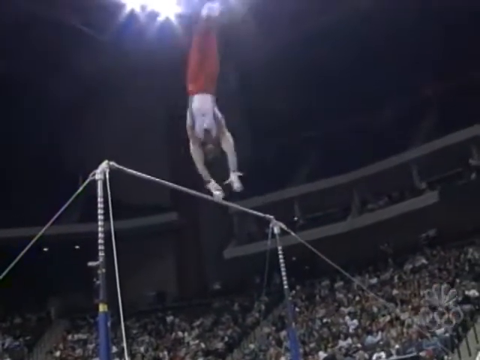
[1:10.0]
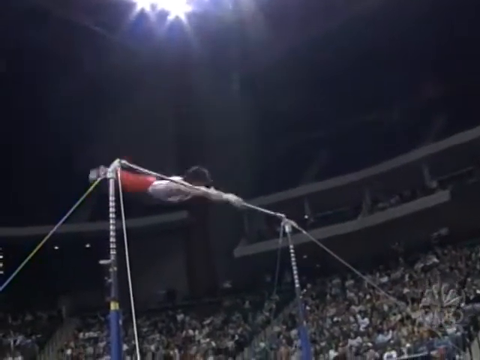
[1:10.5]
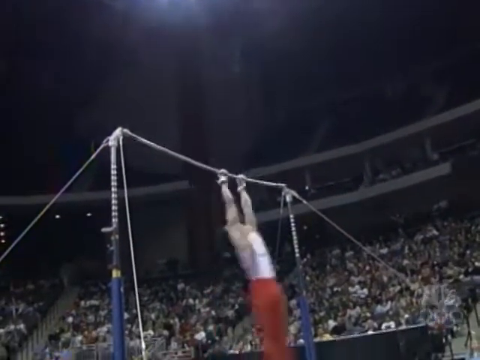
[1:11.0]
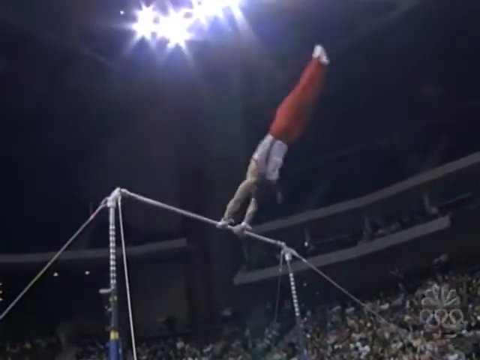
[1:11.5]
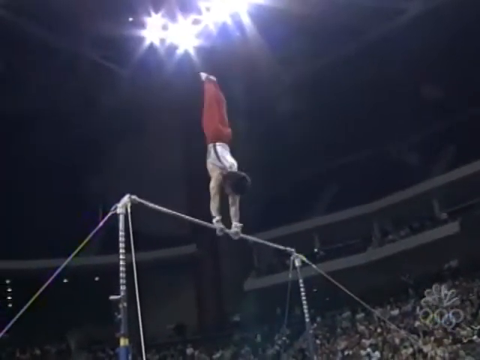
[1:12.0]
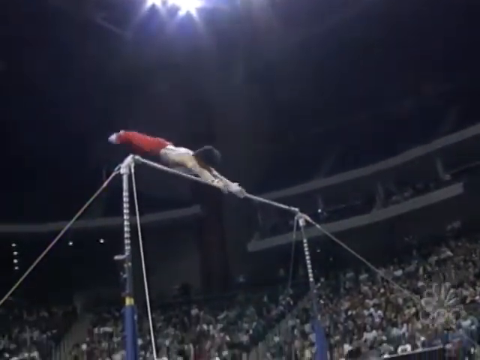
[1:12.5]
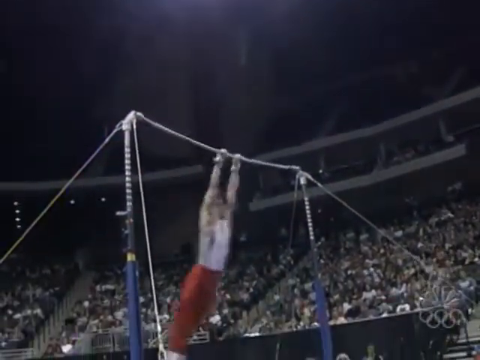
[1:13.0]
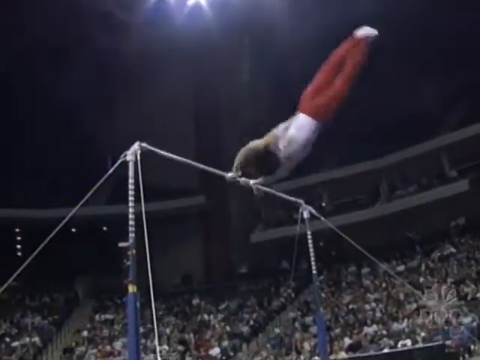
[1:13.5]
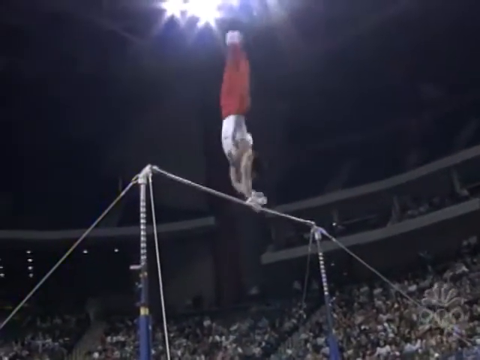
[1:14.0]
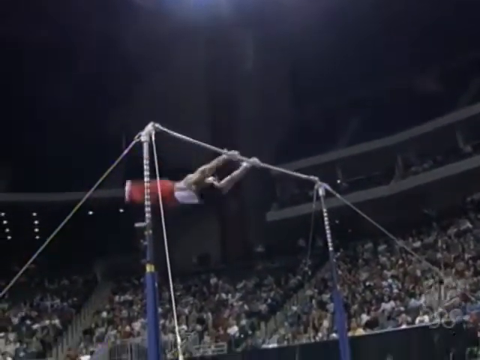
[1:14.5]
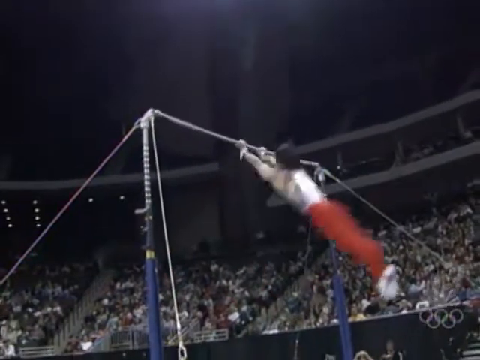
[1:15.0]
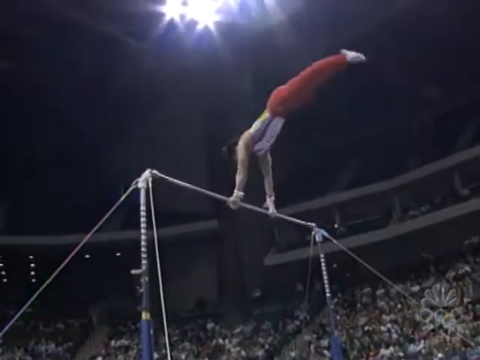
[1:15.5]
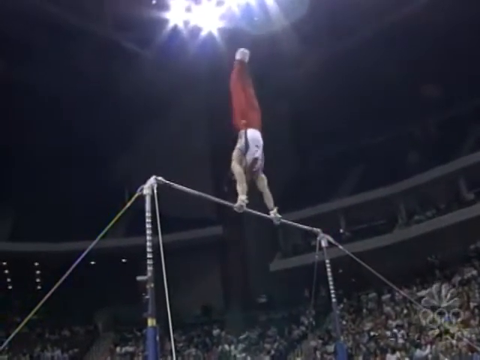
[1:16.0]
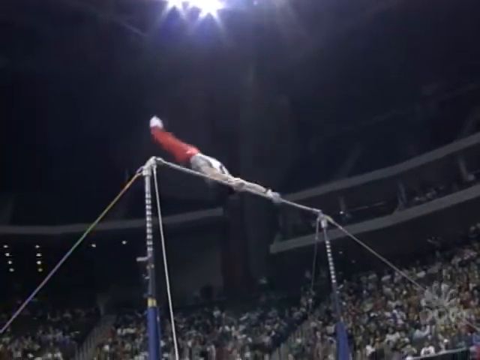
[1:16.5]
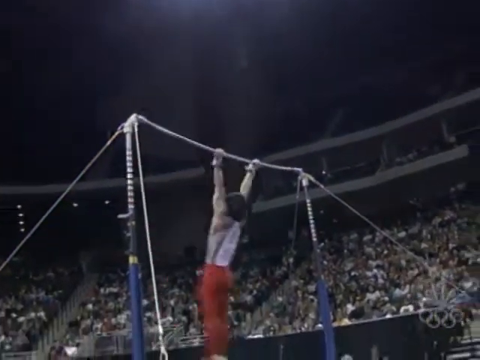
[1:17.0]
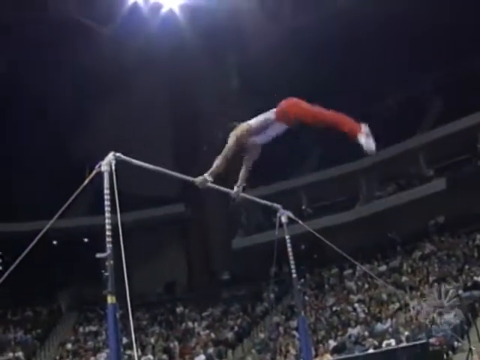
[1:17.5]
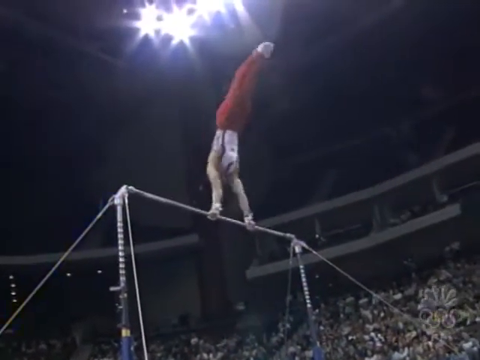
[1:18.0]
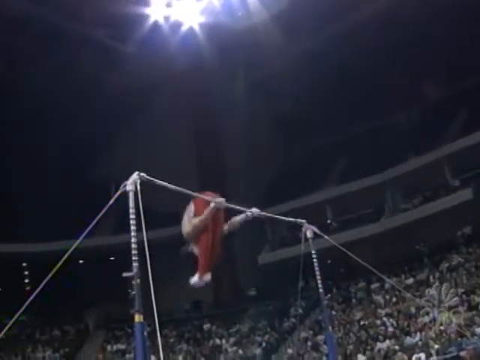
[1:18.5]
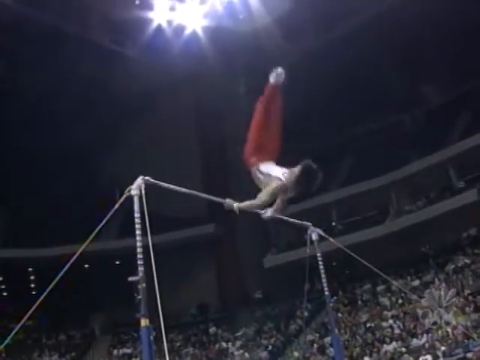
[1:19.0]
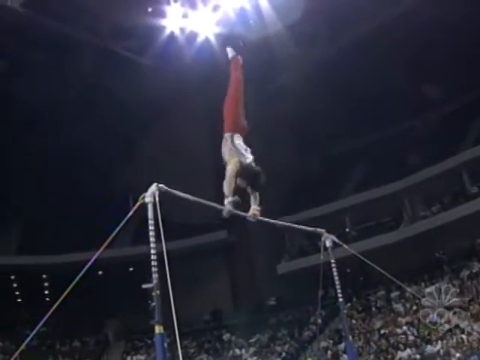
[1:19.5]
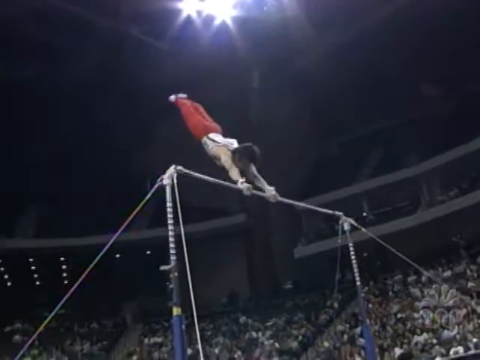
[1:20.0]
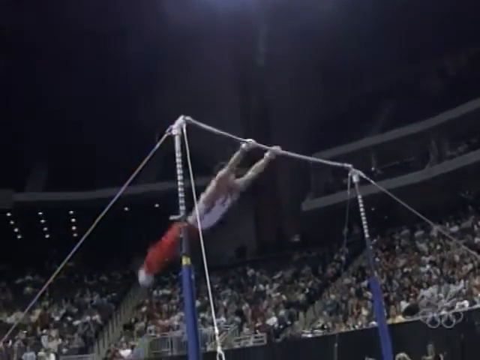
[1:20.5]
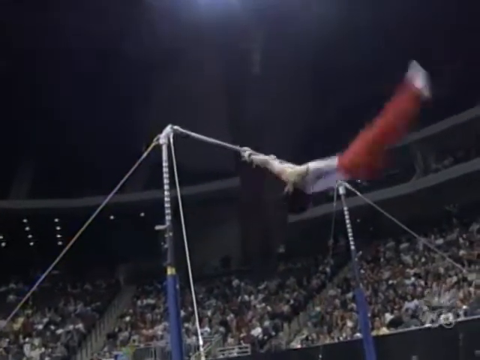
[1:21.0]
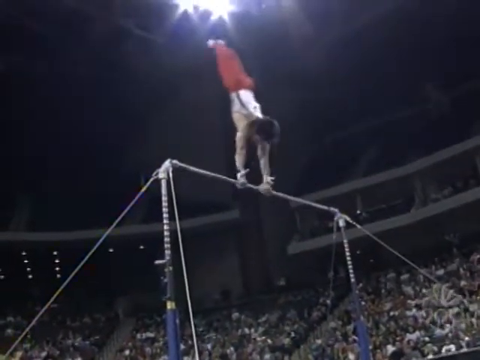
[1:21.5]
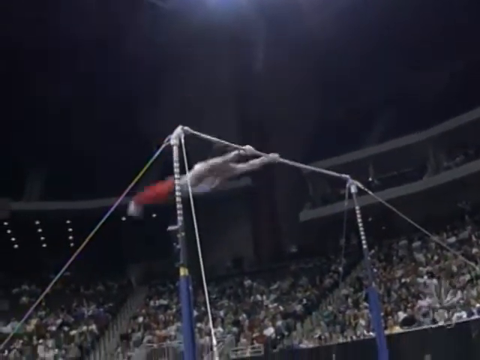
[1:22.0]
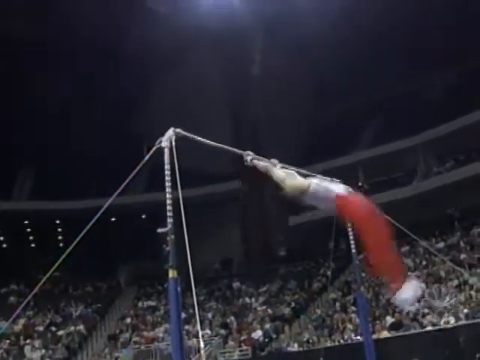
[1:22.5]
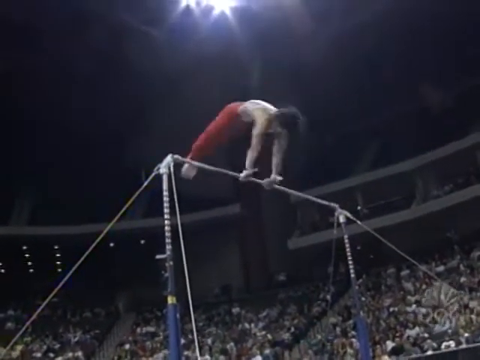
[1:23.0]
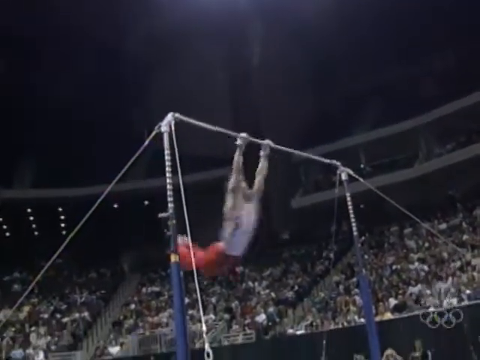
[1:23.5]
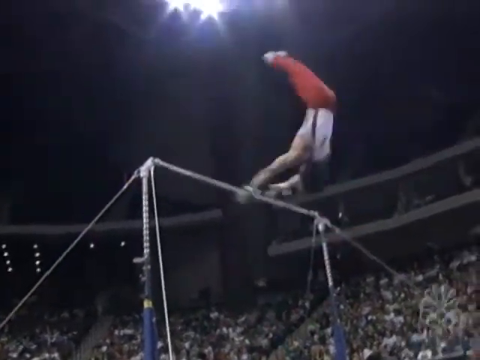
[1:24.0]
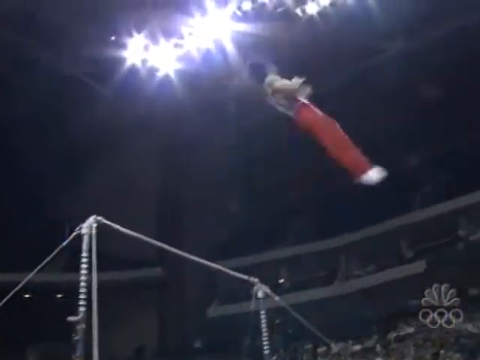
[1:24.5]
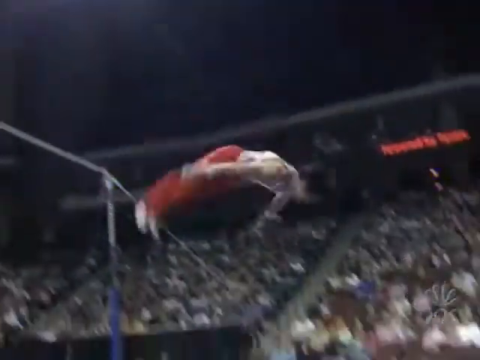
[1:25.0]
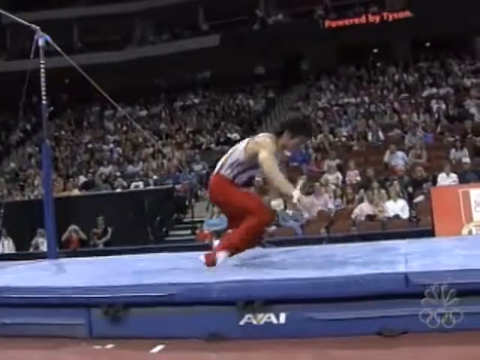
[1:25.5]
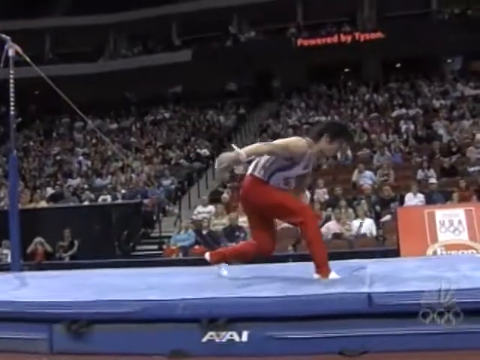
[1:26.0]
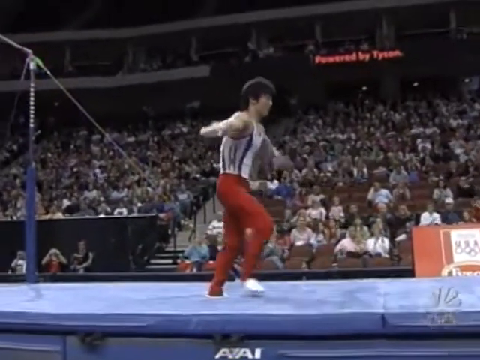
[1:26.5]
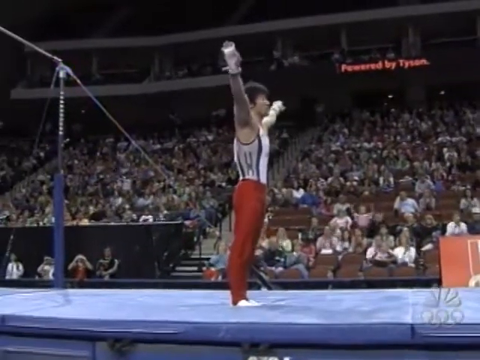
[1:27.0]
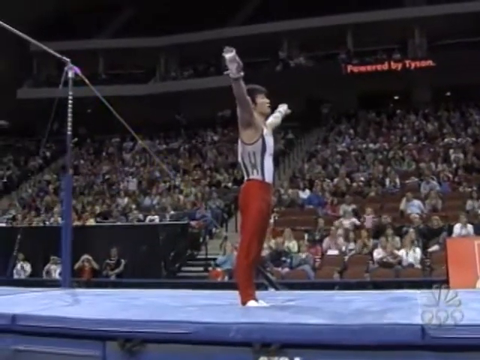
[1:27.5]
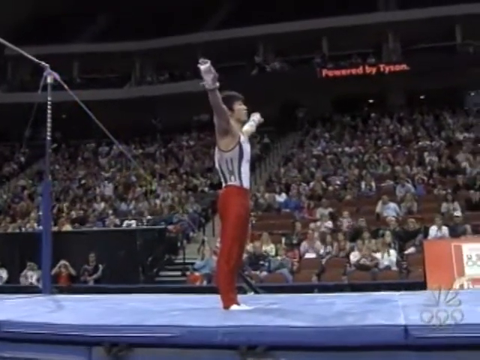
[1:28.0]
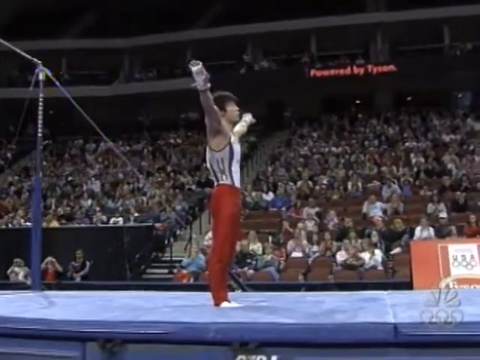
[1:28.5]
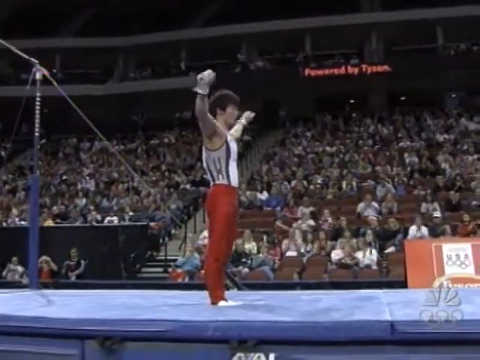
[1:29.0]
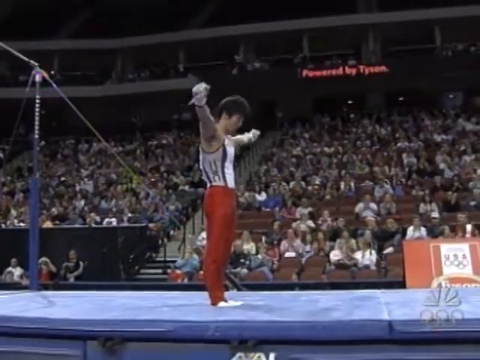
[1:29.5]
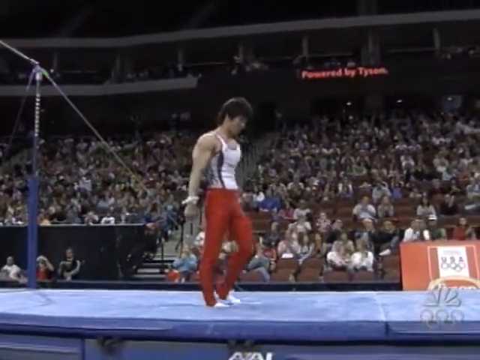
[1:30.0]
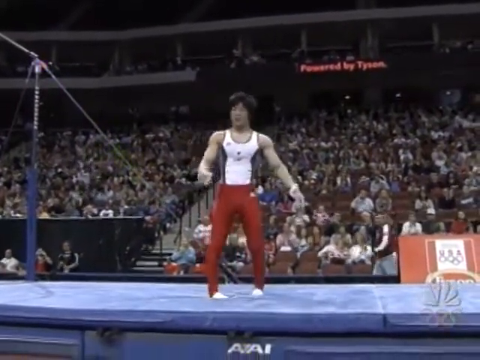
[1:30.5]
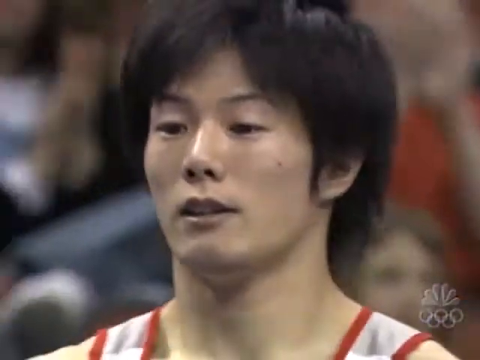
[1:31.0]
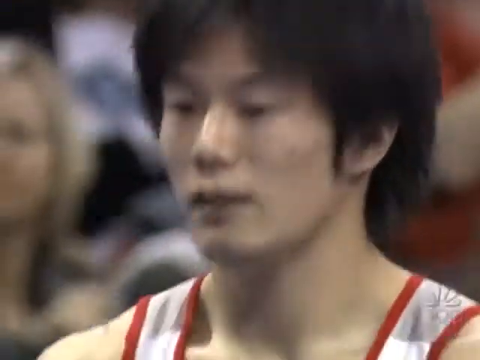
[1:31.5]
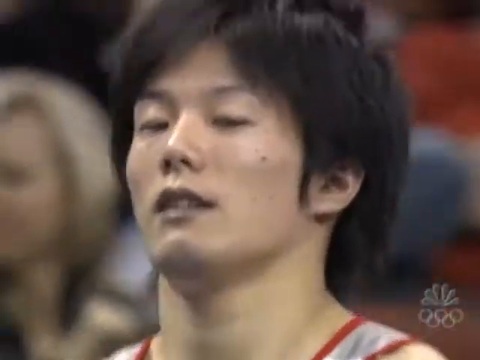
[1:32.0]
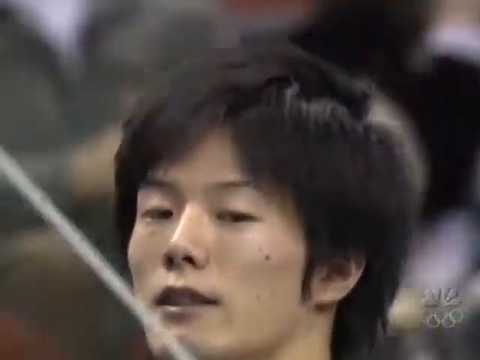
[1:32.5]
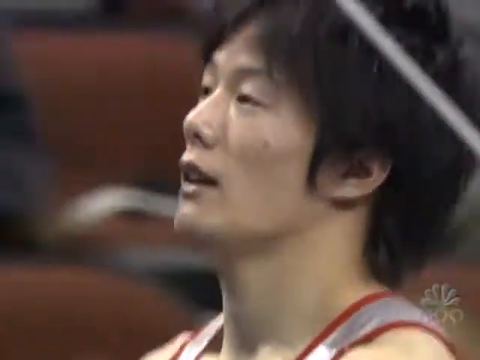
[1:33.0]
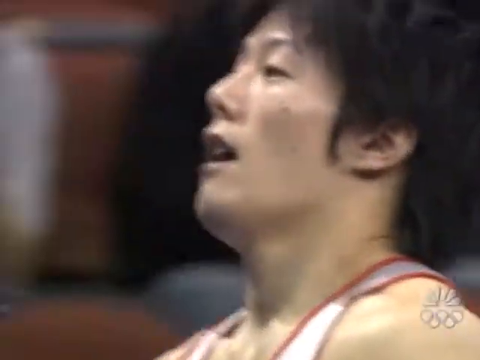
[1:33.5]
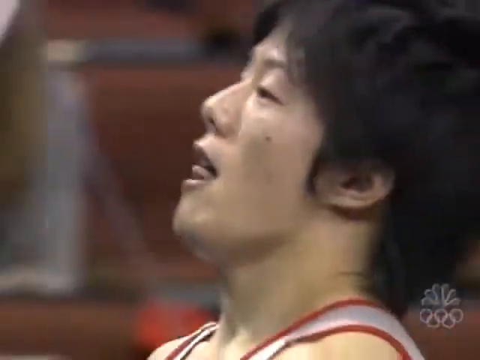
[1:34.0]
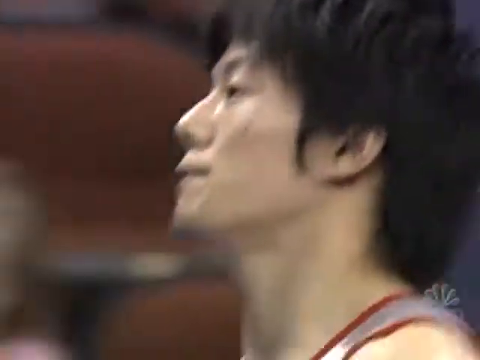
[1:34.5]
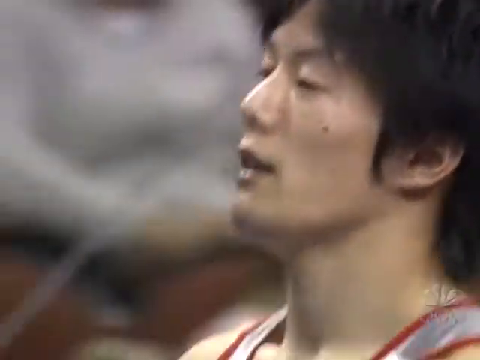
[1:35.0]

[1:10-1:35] The Japanese athlete continues moving on the bar, which is quite high up. He comes down and spins fully, doing 360 spins on the bar. As he spins around, he also lets go with his left arm and spins his body on its own to swap his position as he comes down. At first he spins at a decent speed, then slows down and starts doing more tricks, such as pulling his legs in toward his body: as he spins downward, instead of keeping his body flat, he goes head-first and puts his legs between his head and the arms holding the bar. He spins like that, then reaches his legs out again while still changing the position of his hands on the bar. He does a couple more normal spins, and as he gains momentum he lets go of the bar, does a couple of spins and lands on the blue mat.